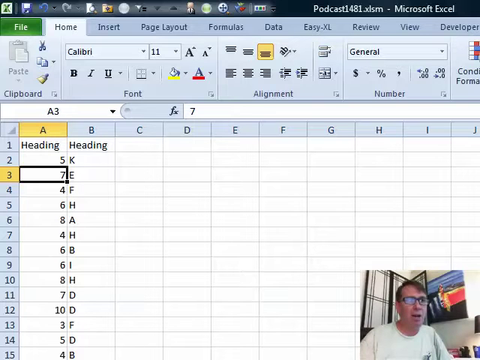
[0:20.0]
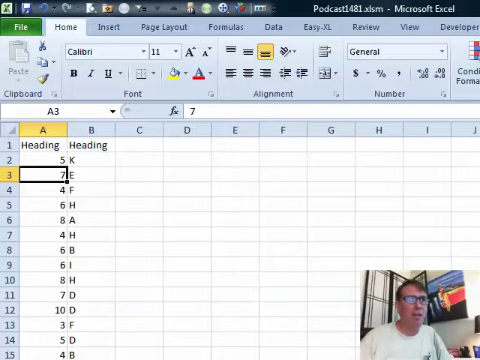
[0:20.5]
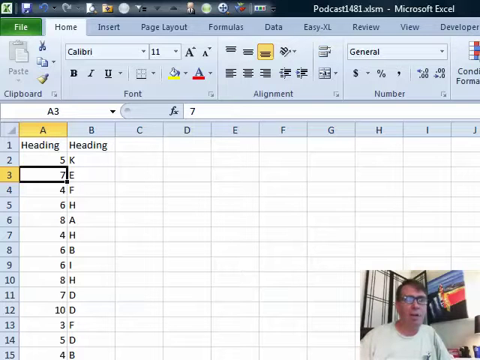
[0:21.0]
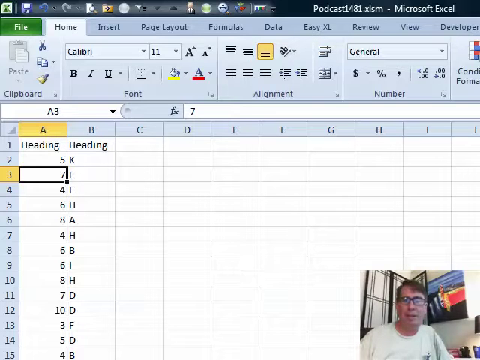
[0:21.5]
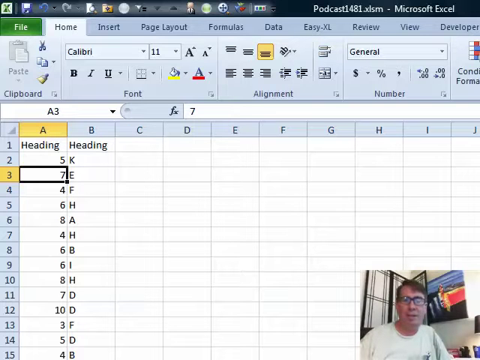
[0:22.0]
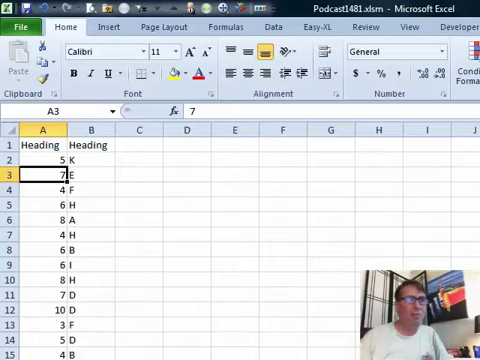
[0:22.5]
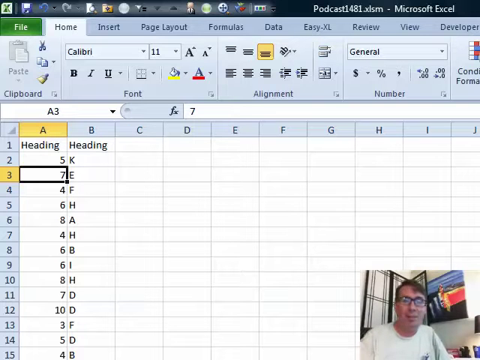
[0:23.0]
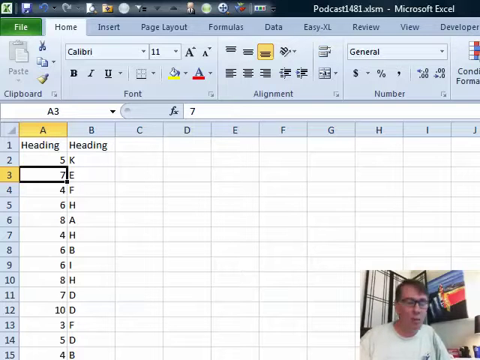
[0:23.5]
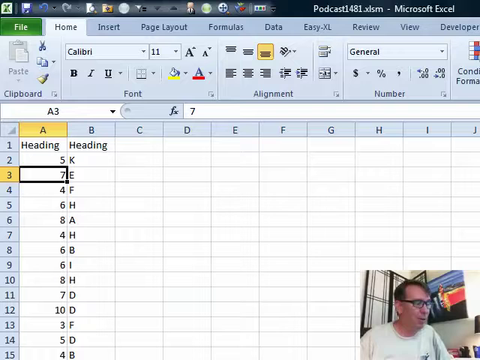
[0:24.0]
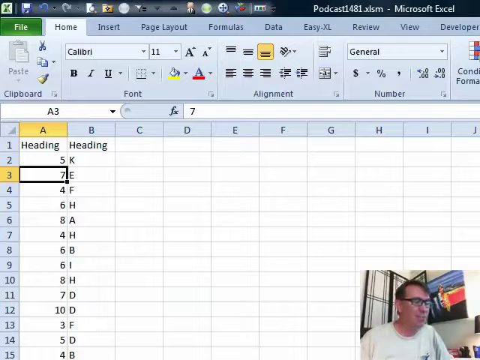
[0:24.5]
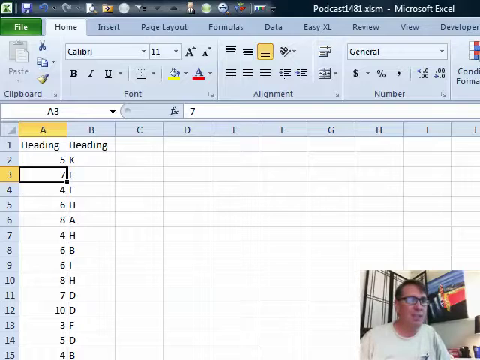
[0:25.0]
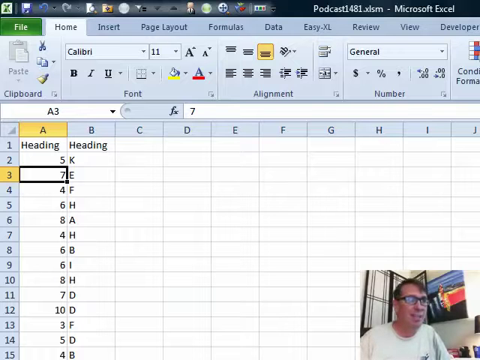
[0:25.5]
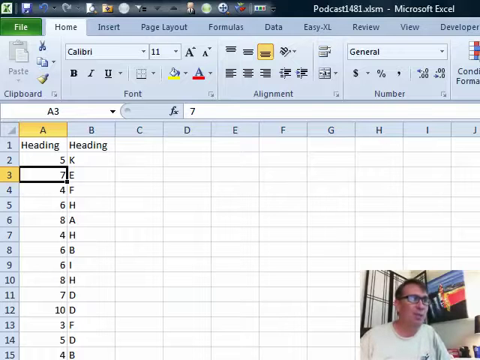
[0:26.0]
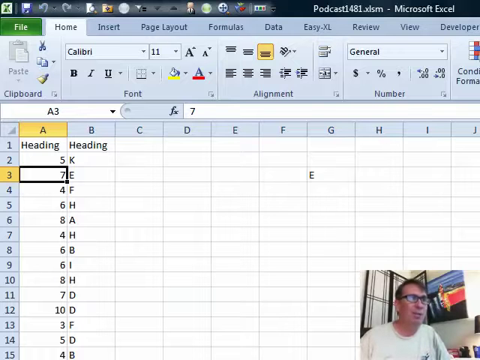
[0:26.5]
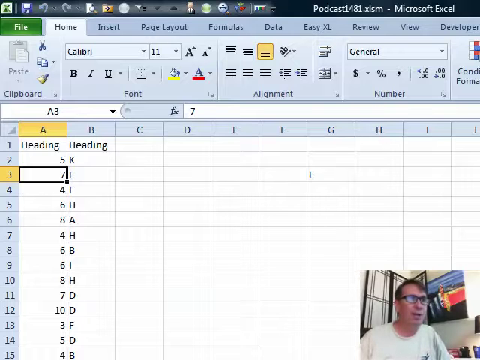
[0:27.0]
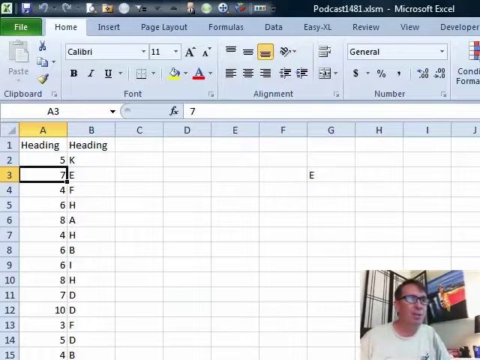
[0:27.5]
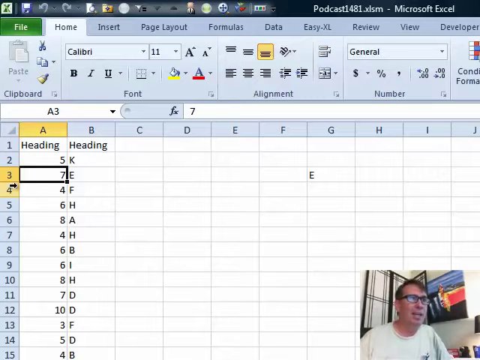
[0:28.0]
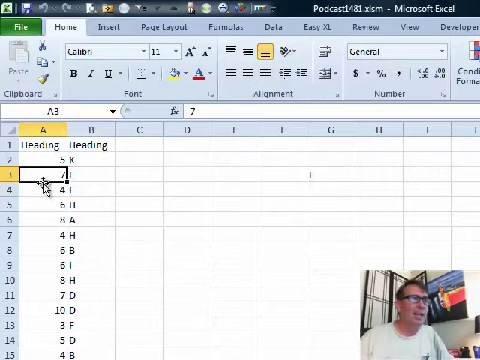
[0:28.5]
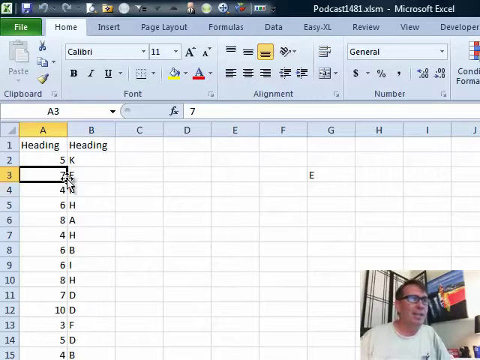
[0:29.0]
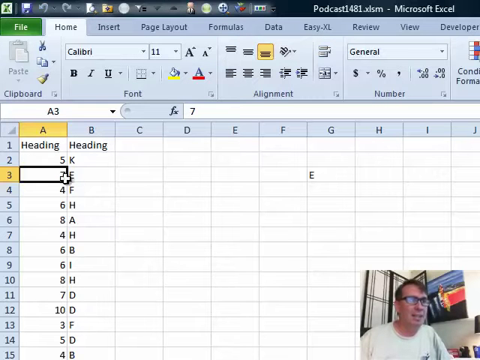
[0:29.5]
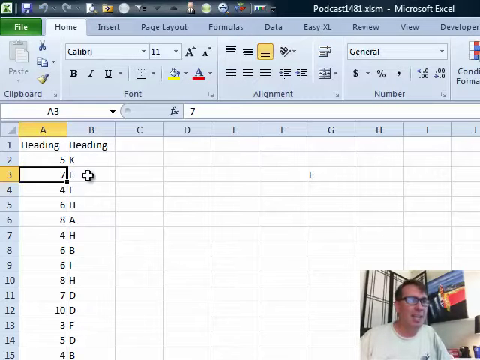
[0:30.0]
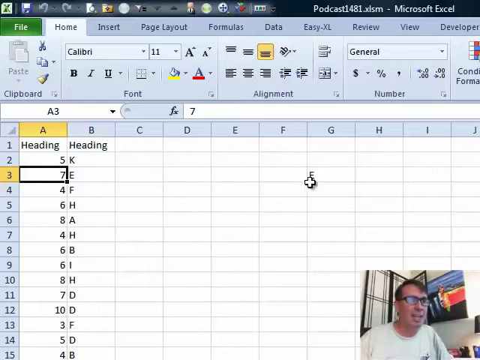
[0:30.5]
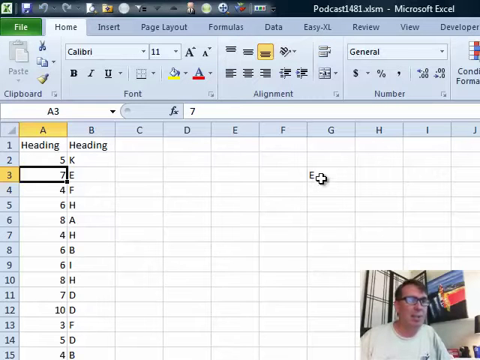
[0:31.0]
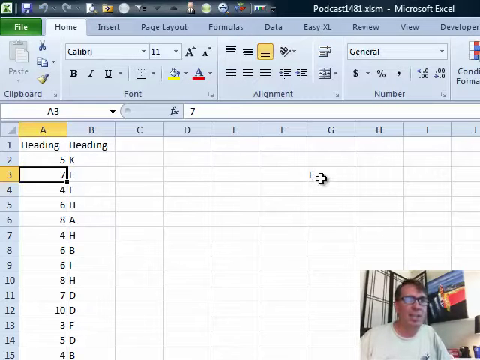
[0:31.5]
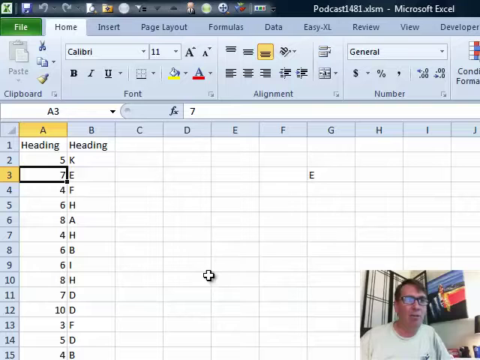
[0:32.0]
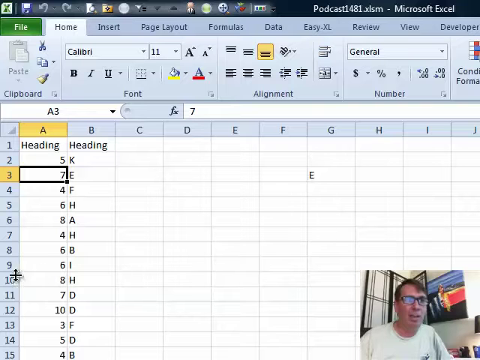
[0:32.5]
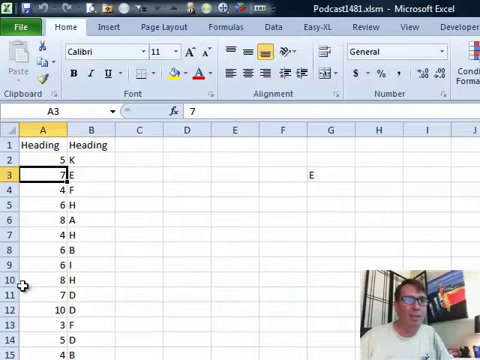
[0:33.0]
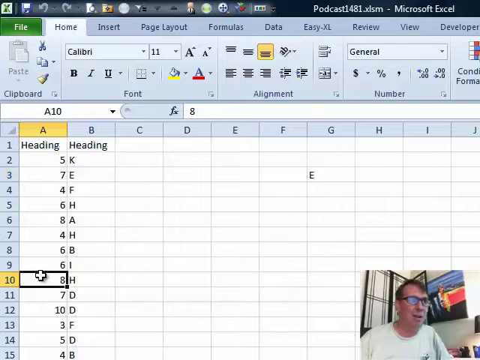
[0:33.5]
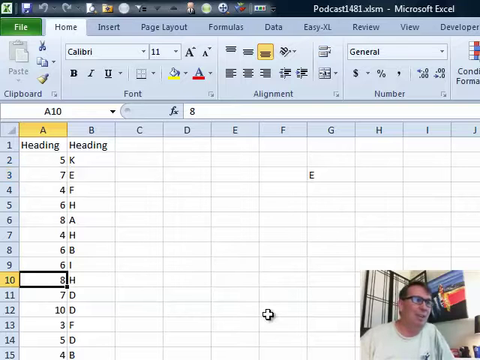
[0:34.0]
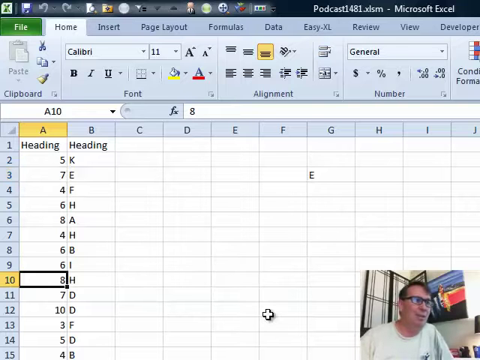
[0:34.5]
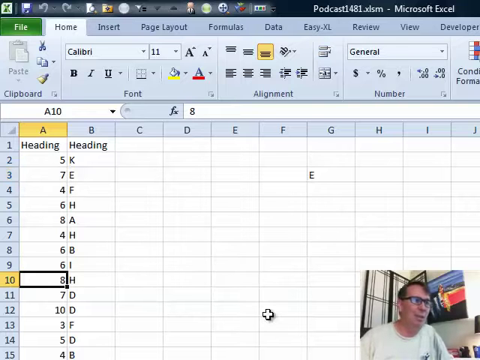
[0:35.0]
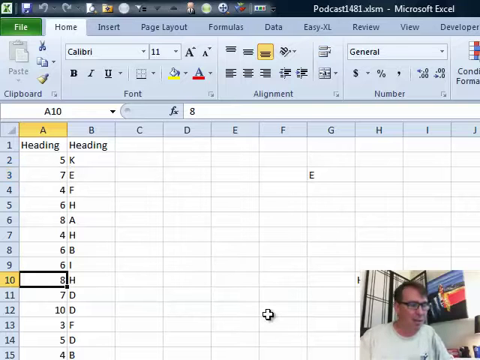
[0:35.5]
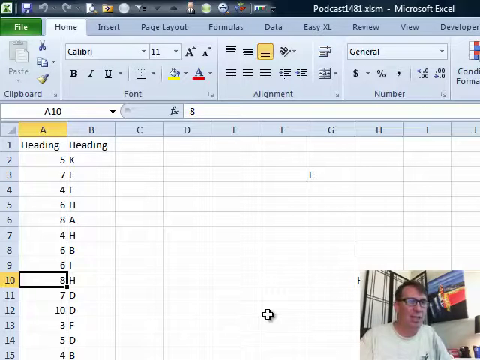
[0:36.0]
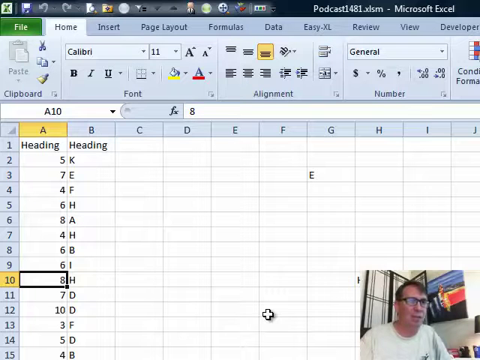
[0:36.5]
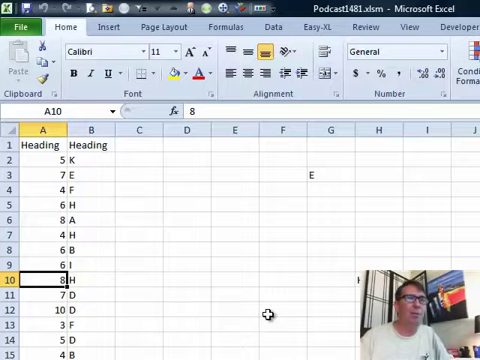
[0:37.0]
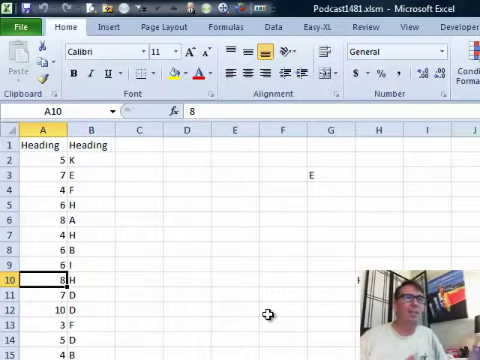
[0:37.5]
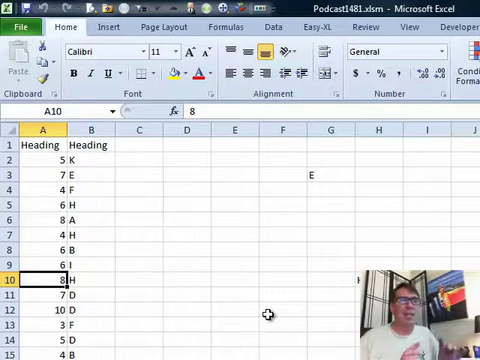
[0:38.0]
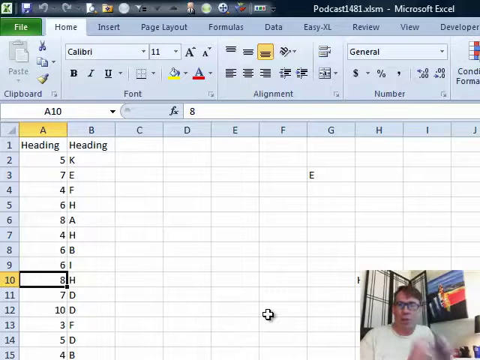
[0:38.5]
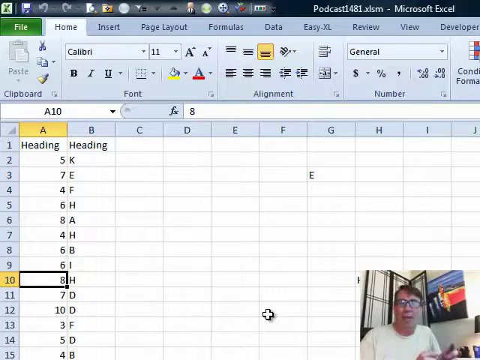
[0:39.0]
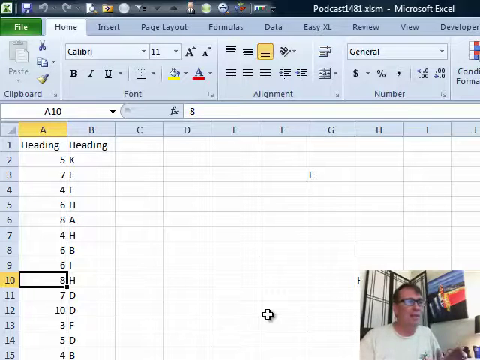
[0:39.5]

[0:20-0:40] The video starts with text saying the podcast is sponsored by www.Easy-XL.com, with a spreadsheet at the bottom. A man with an avatar appears at the bottom right; he is white with brown hair. The text reads "learn Excel podcasts" and there is a book. Then a spreadsheet appears with a picture-in-picture of a man teaching how to do the Excel spreadsheet; he is white, with dark hair and black glasses. He appears to be showing how to copy over. The cursor moves between the columns; column A has numbers and column B has letters.